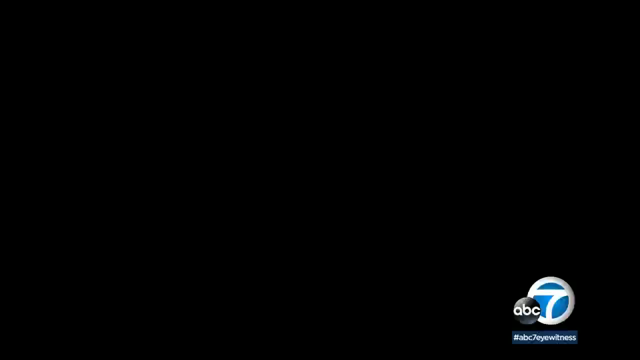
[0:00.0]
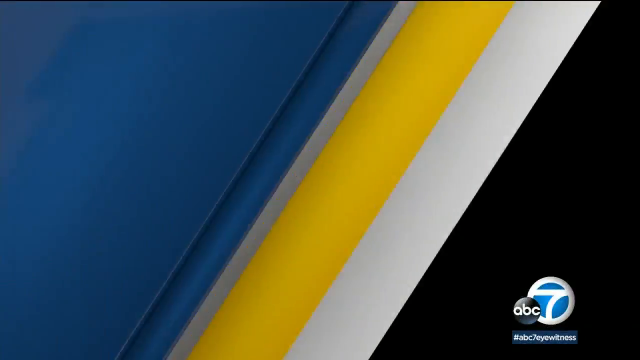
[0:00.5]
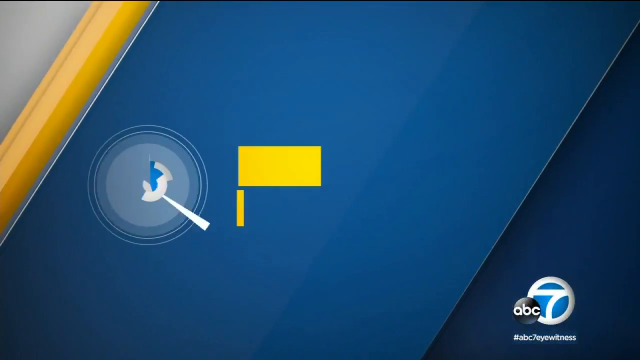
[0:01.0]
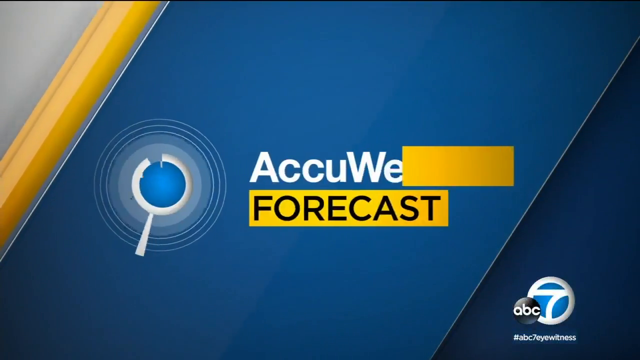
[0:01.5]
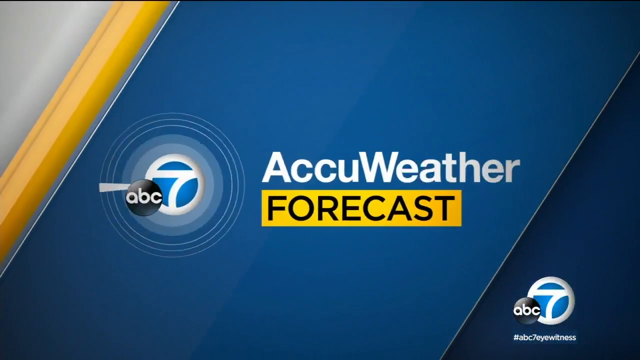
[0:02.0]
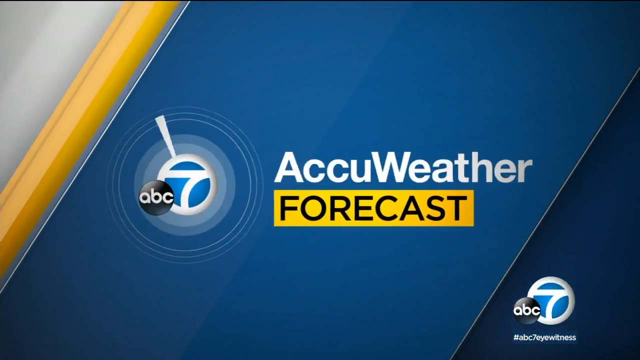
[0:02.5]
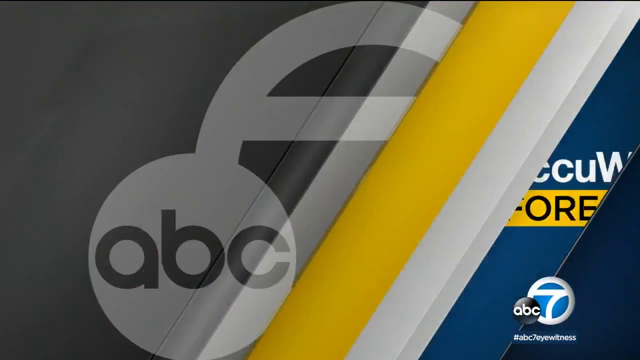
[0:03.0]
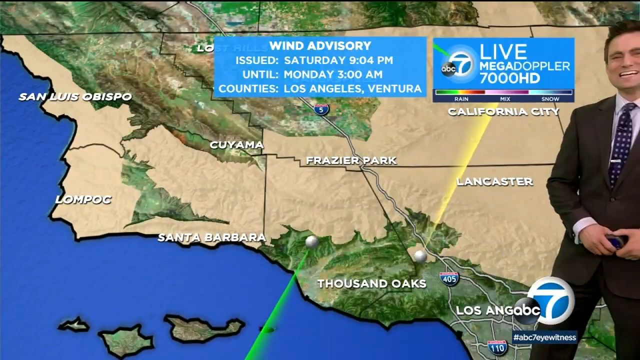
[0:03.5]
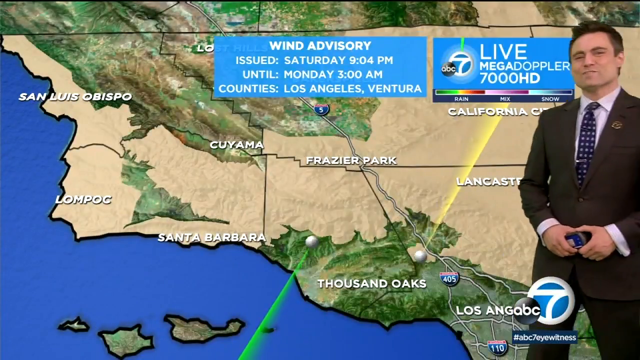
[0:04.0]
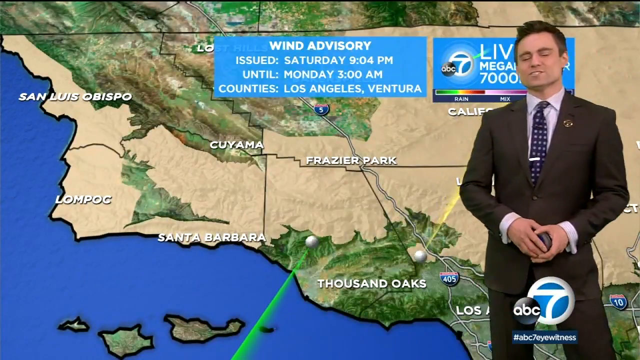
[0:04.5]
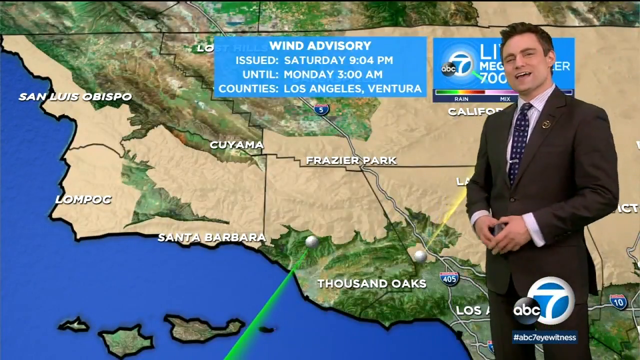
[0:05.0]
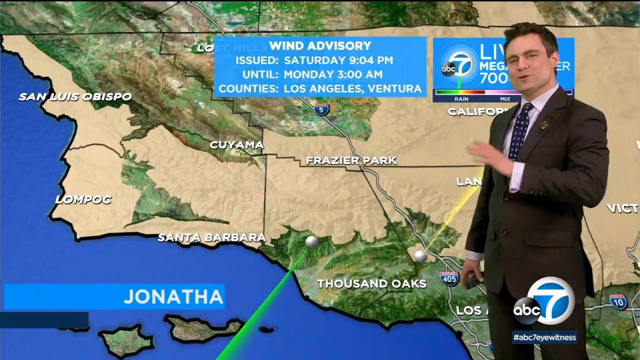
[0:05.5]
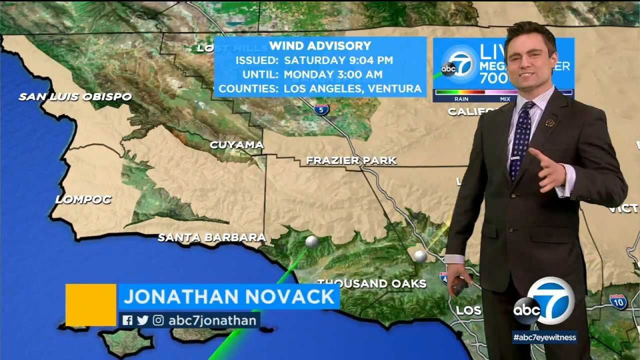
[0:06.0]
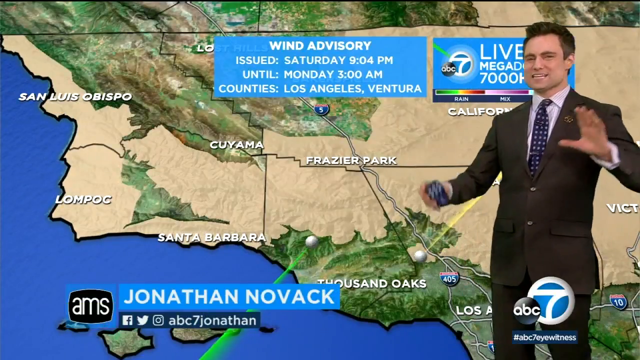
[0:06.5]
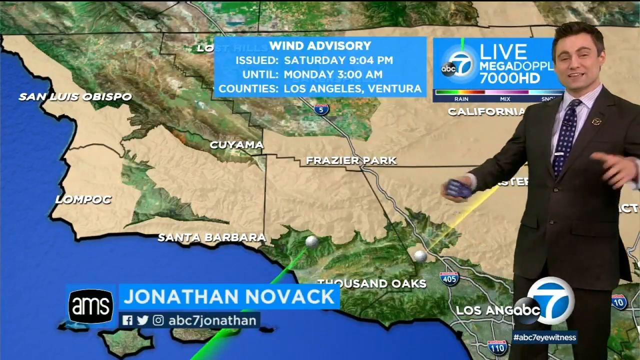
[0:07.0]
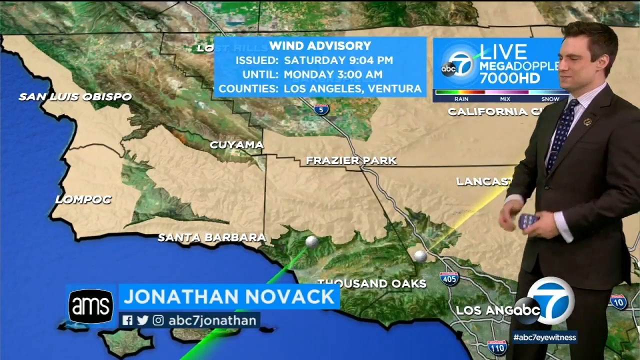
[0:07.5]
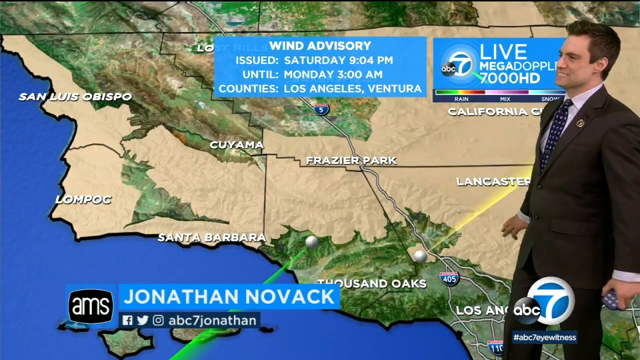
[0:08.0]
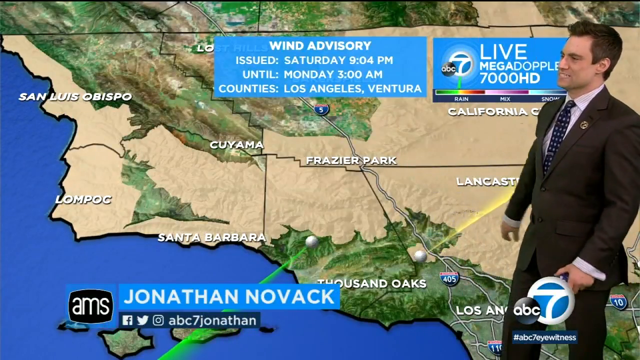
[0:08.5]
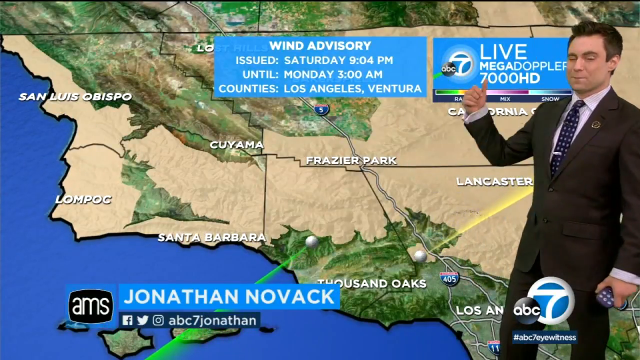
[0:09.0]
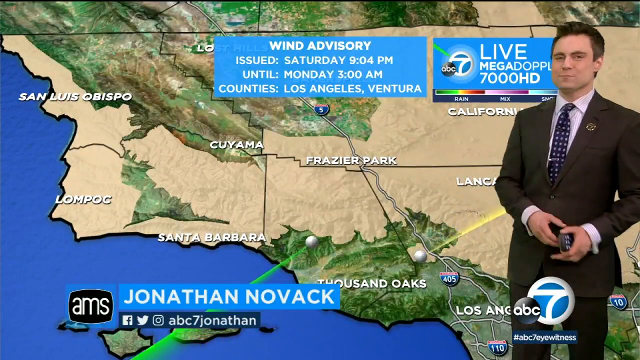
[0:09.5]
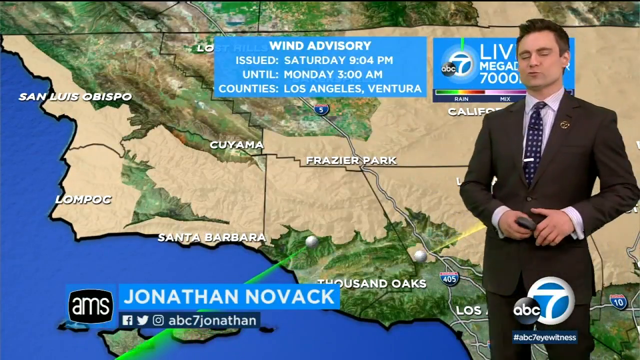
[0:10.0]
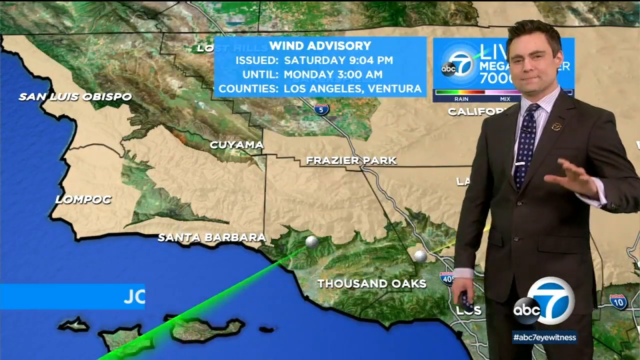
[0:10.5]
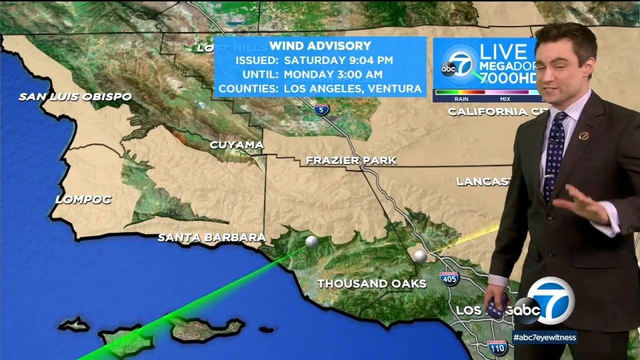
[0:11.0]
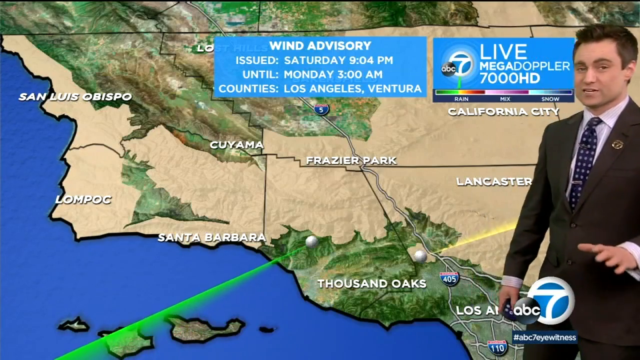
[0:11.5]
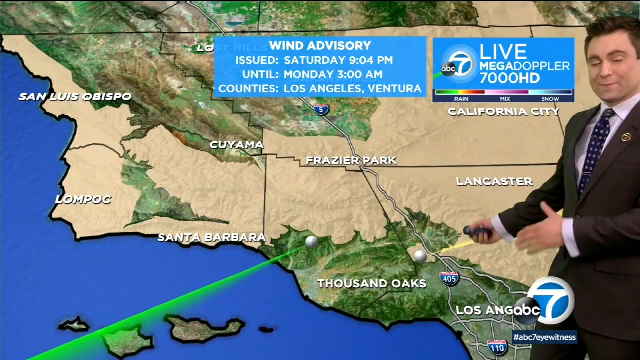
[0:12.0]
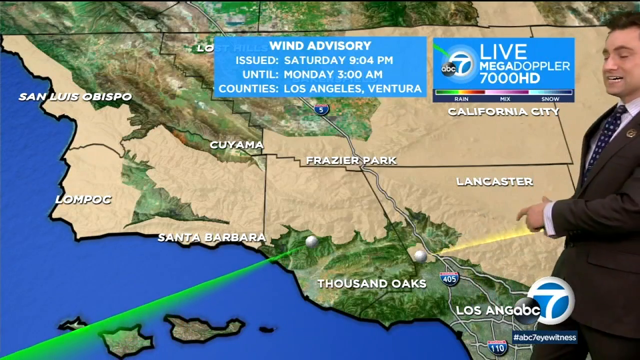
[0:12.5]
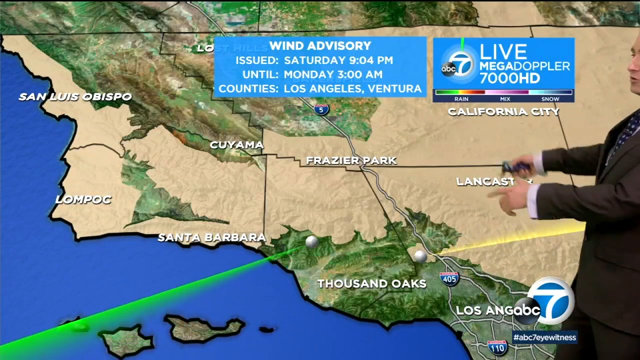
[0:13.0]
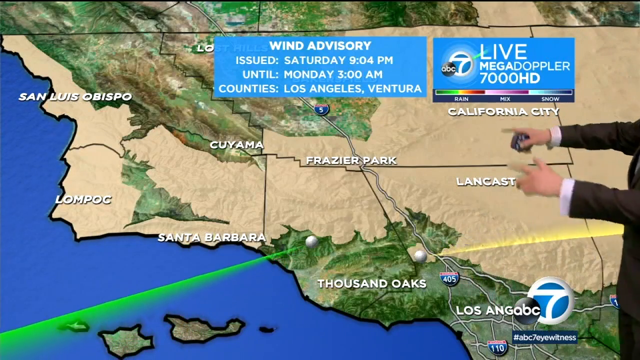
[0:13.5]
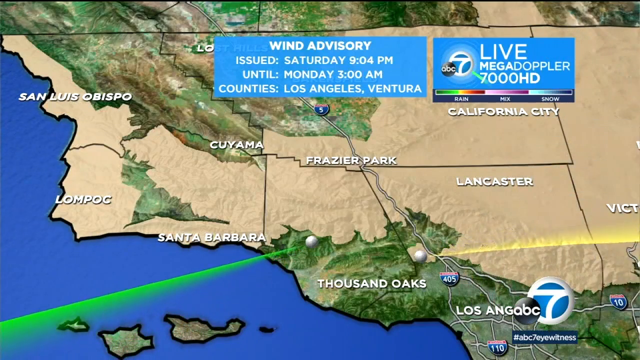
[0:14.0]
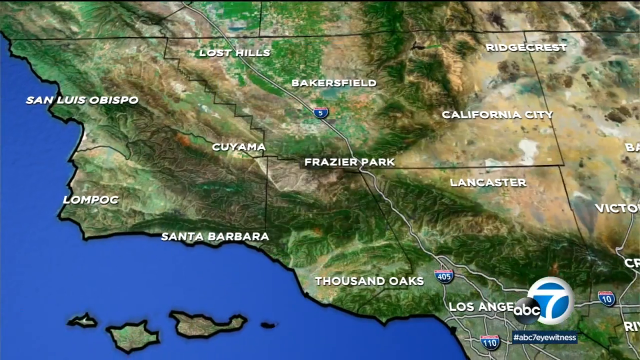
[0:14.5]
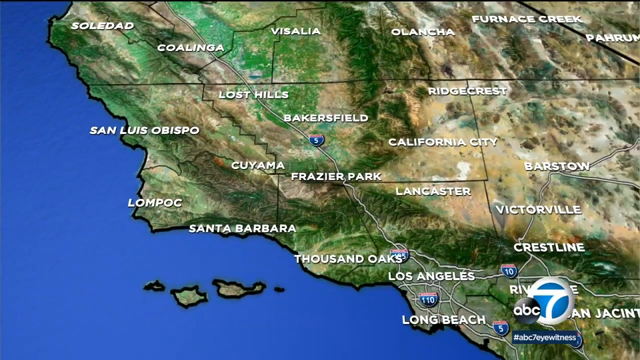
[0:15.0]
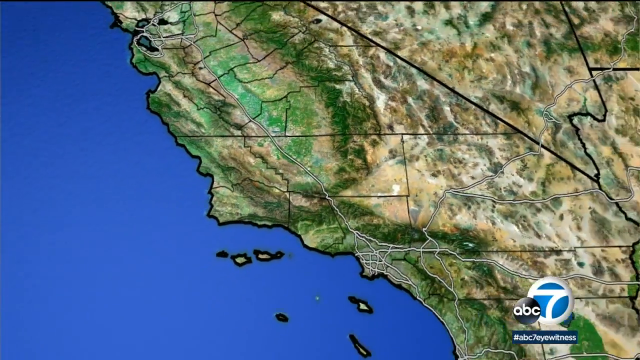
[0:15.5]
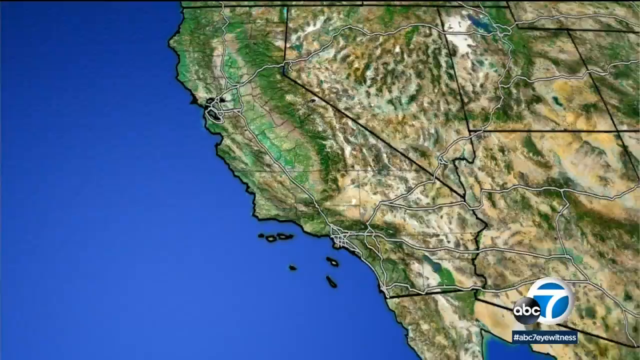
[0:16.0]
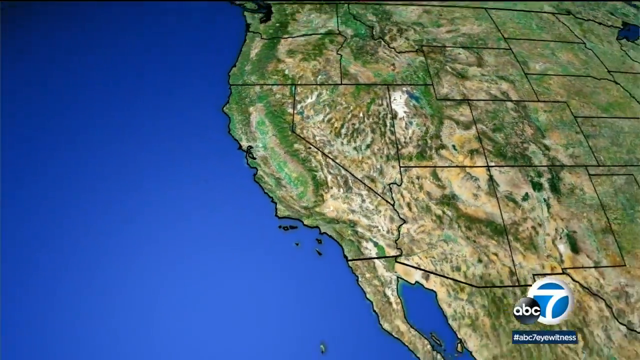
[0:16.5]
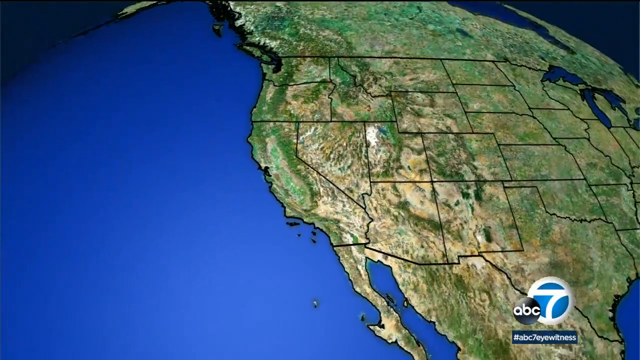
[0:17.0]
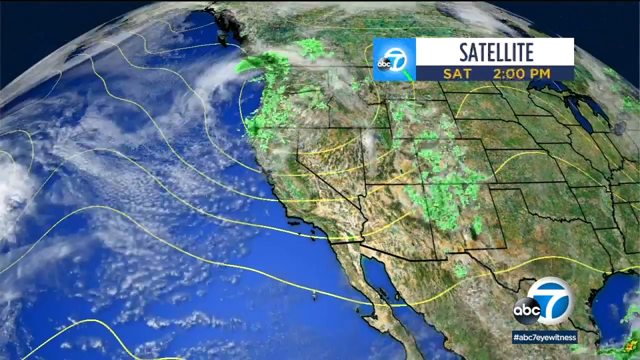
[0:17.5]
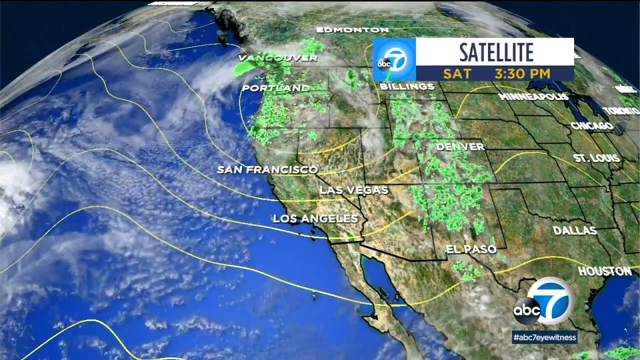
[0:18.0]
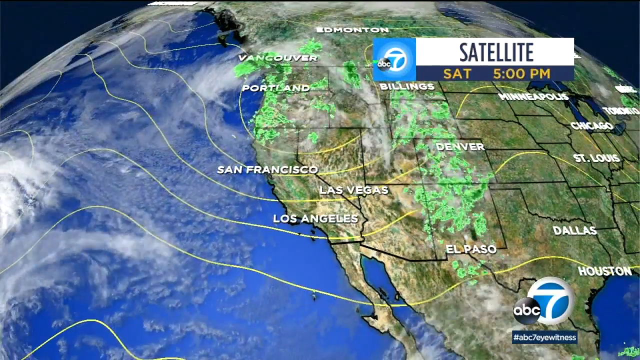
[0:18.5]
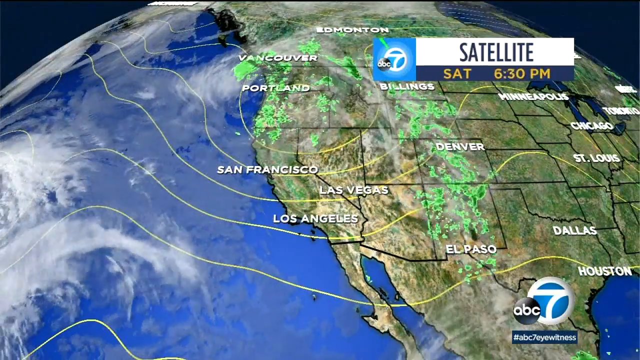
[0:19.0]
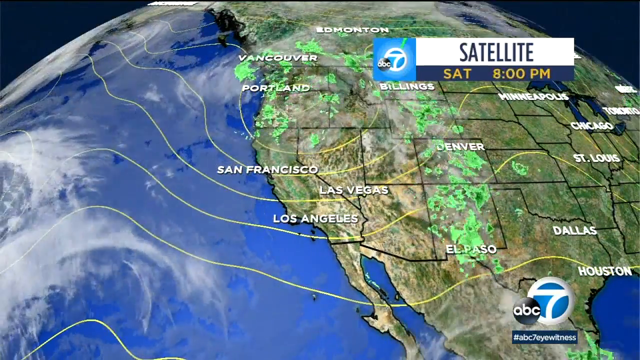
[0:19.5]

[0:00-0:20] The screen opens on the ABC AccuWeather forecast. A man, Jonathan Norfolk, presents the weather, and behind him a Wind Advisory display shows that the advisory was issued Saturday at 9:04 p.m. and runs until Monday at 3 a.m., with Los Angeles and Ventura as the affected counties. The broadcast title "Live Megadop" is shown, with "7,000 HD" beneath it. Under that logo there is rain, and a map of California shows cities from Santa Barbara to Frazier Park, Kiriyama, San Luis Obispo, Lancaster, California City and Lompoc. He also shows a satellite view marked Saturday 5:30 p.m., with Edmonton and other city names on the map, including San Francisco, Las Vegas, Los Angeles, El Paso, Denver, Dallas, Austin, St. Louis, Chicago, Minneapolis and Billings.